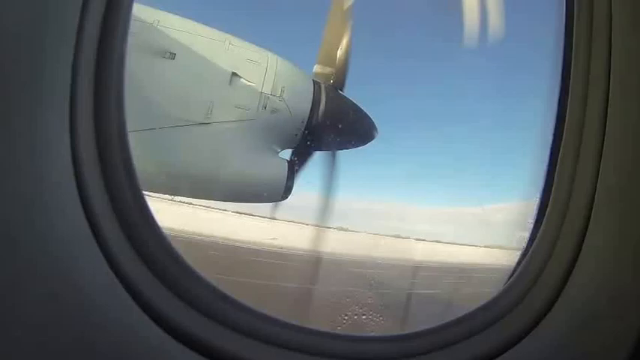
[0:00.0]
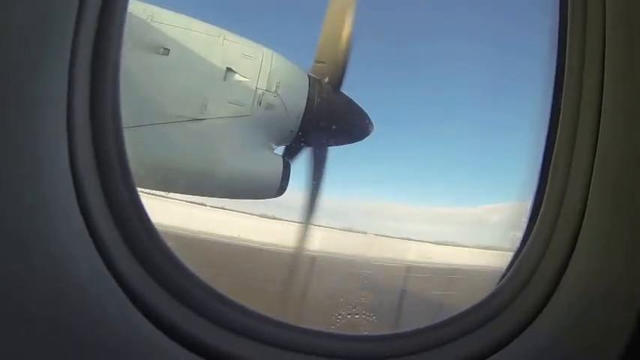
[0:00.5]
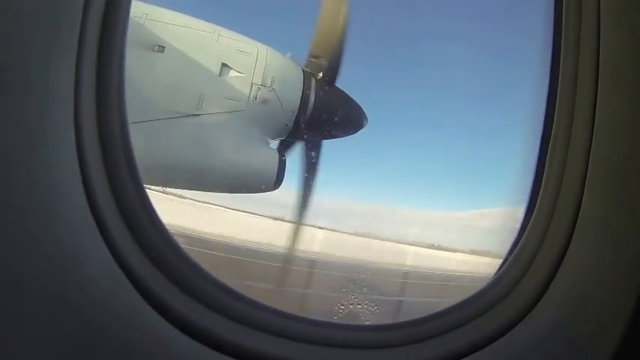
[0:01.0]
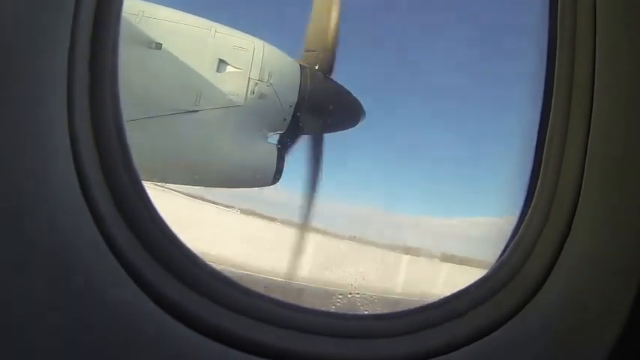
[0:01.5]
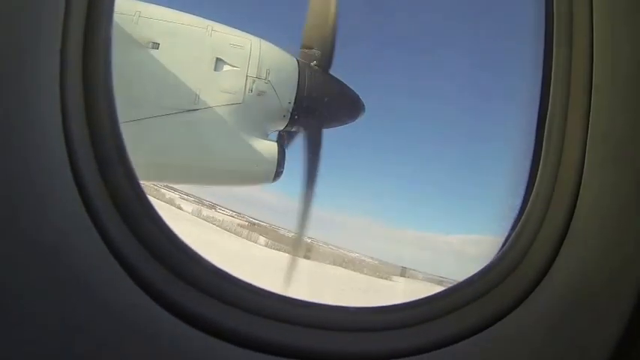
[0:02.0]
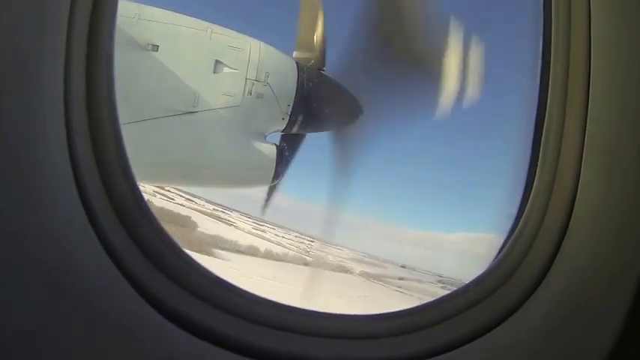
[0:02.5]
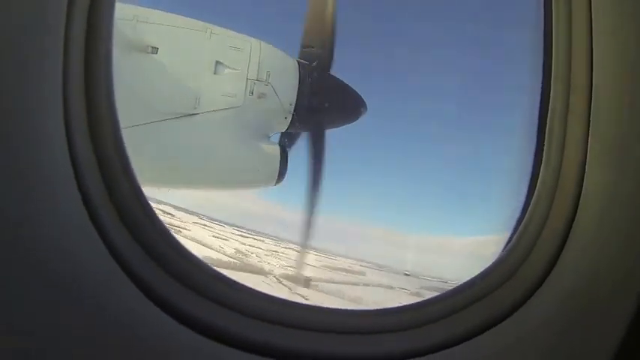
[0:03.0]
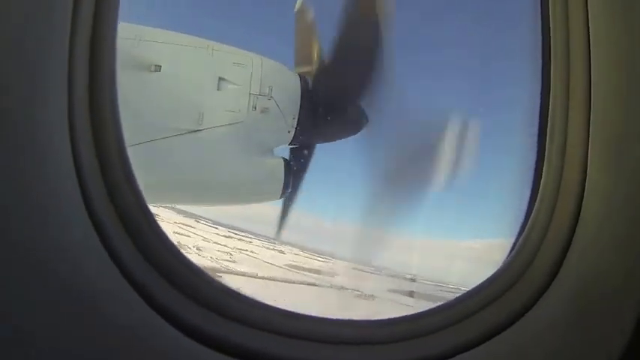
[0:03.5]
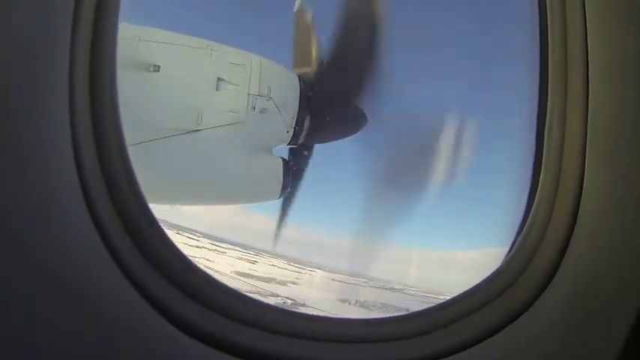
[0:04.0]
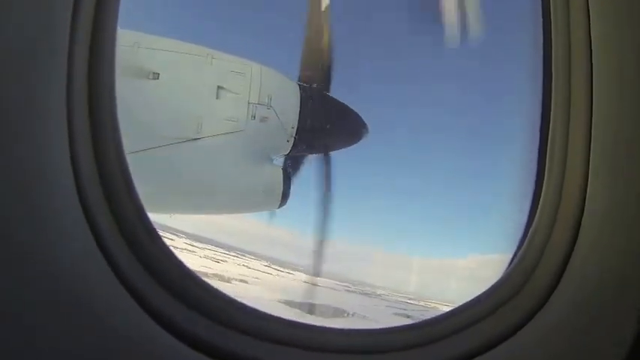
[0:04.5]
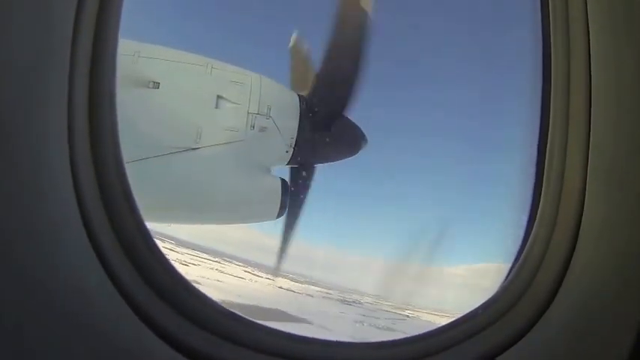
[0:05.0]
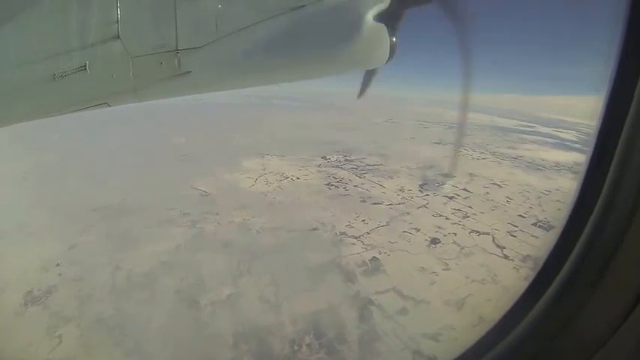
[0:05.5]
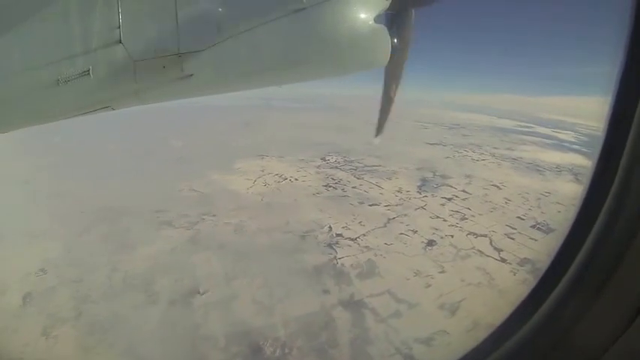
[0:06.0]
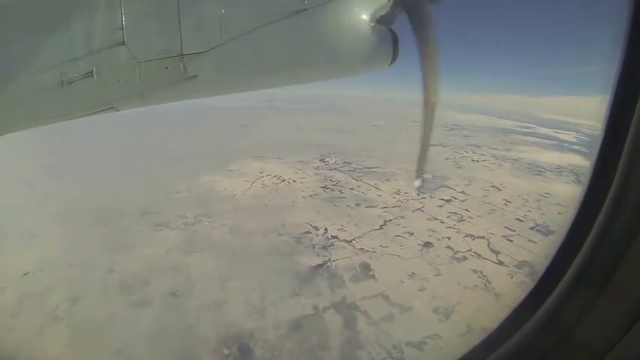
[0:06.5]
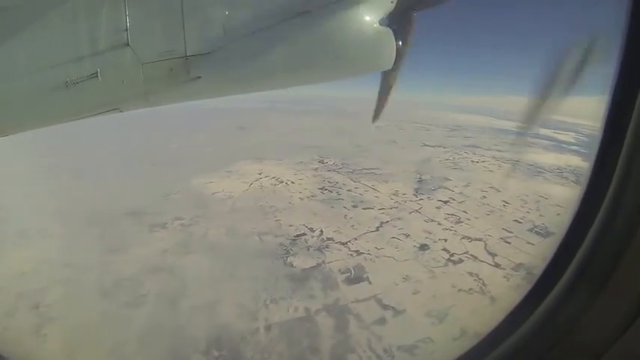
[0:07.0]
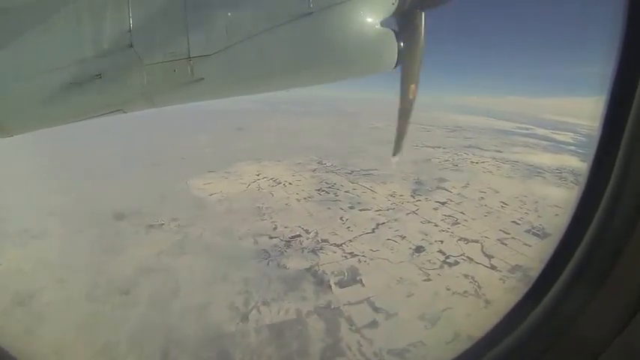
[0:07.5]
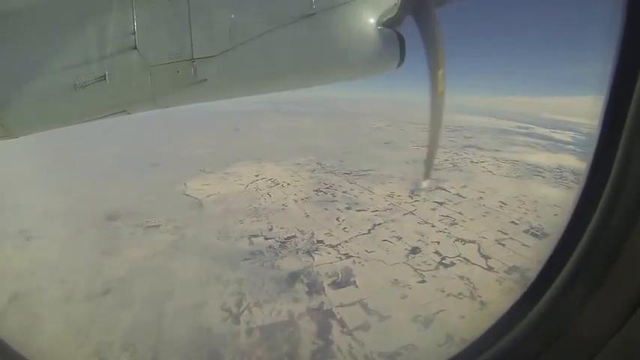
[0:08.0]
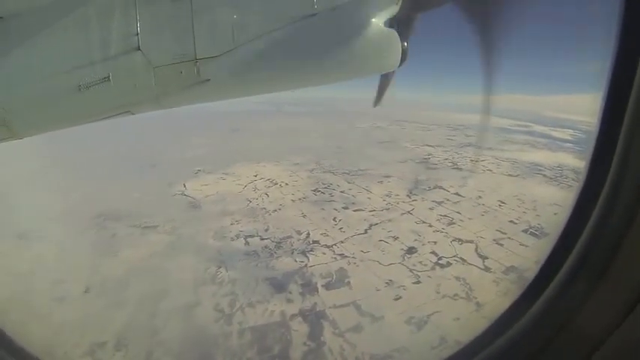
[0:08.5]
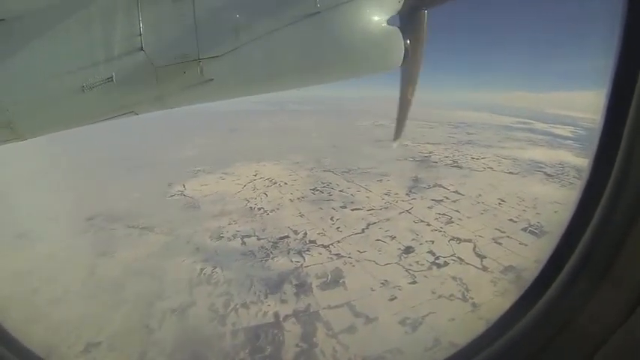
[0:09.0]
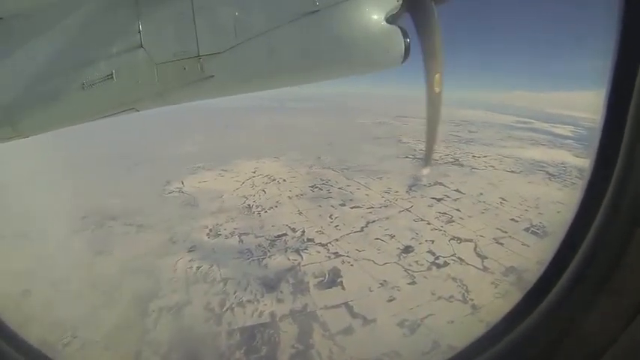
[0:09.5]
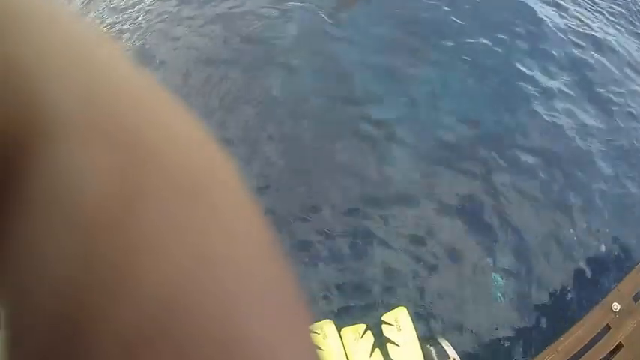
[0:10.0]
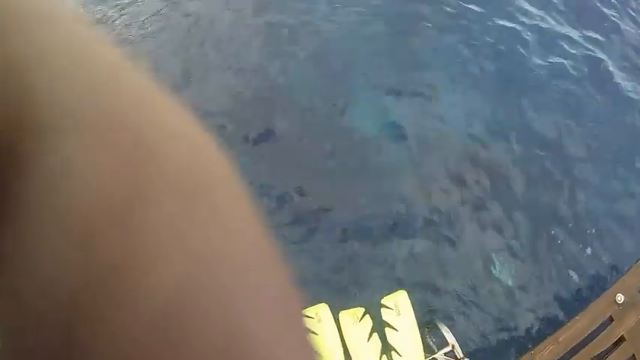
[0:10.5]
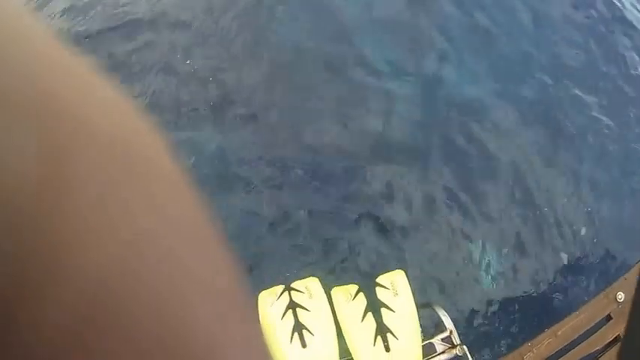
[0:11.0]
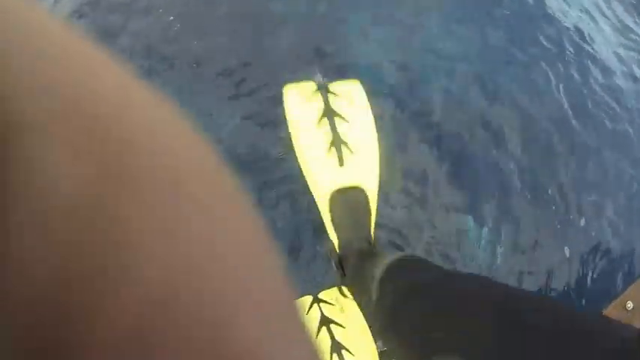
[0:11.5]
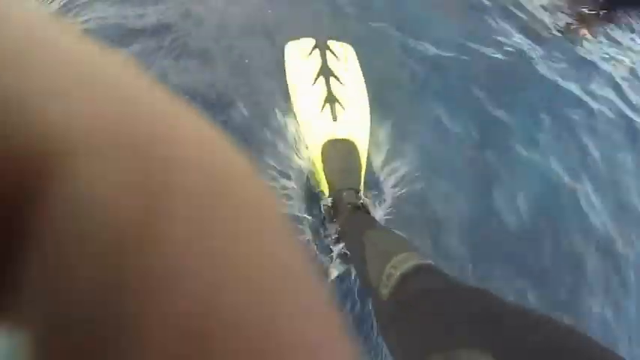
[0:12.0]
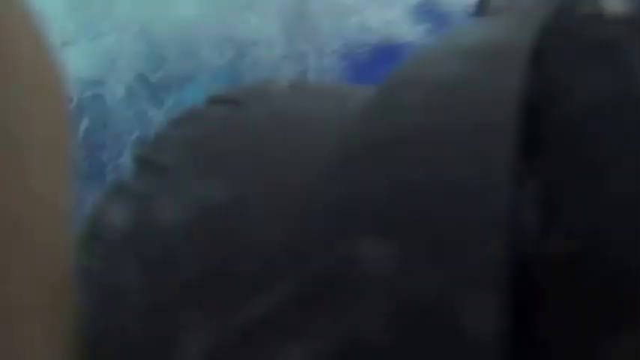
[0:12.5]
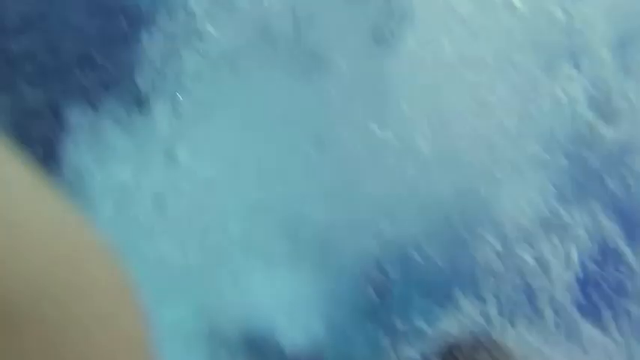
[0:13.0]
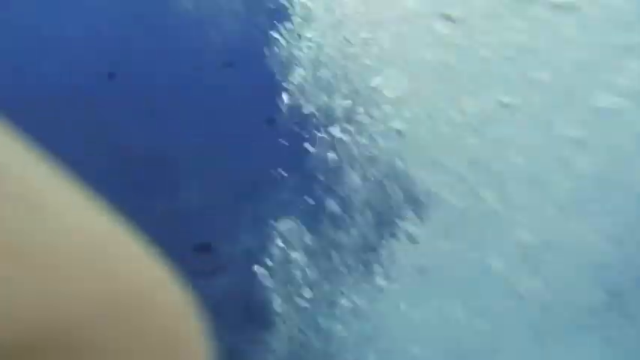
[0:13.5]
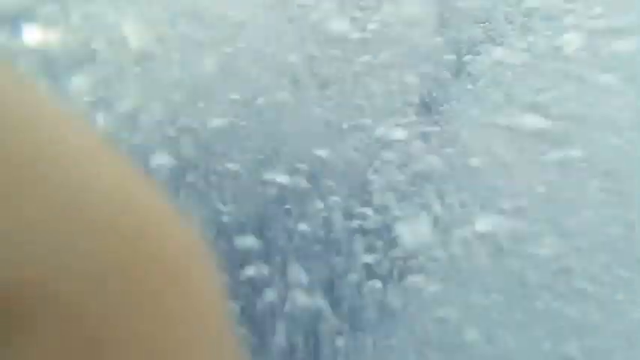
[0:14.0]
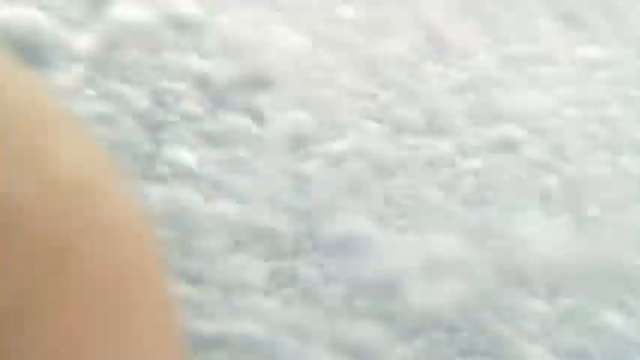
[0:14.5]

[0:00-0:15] The camera views the scene from inside an airplane, with a gray circle and the glass window visible. On the right side is blue sky with white clouds at the bottom. Toward the center is a propeller with a black rounded tip and grayish blades spinning around, attached to the white wing of the plane. Underneath there is a portion of white as well, probably another portion of the plane. At the top left is a circle containing what looks to be a white guy with a beard, and white lettering beside it reads "GoPro Hawaii scuba diving". As the blades rotate, the ground looks white, possibly snow covered. The view then shows a position high above, with clouds below, so the plane looks to be taking off, and the blades slow down as the plane is up in the air. In the next scene, the camera looks directly at water and yellow and black fins as the person holding the camera jumps into the water. White bubbles appear as the person then surfaces to the top of the water.